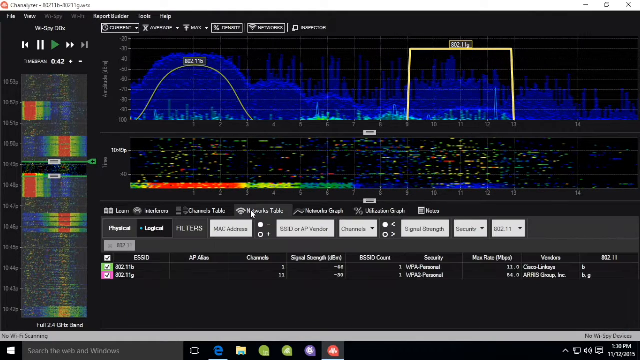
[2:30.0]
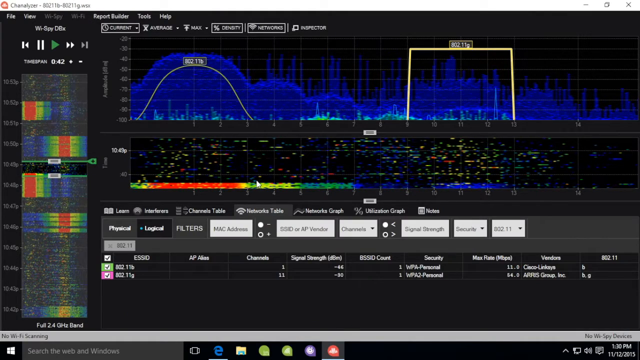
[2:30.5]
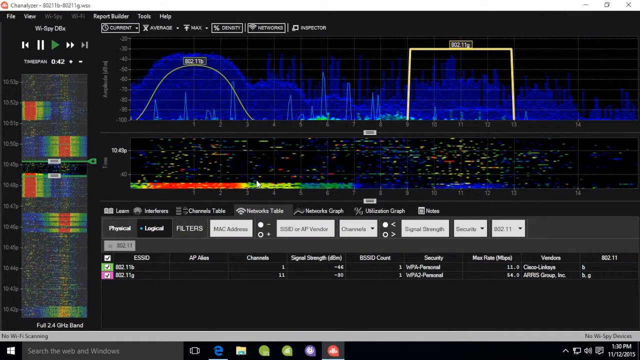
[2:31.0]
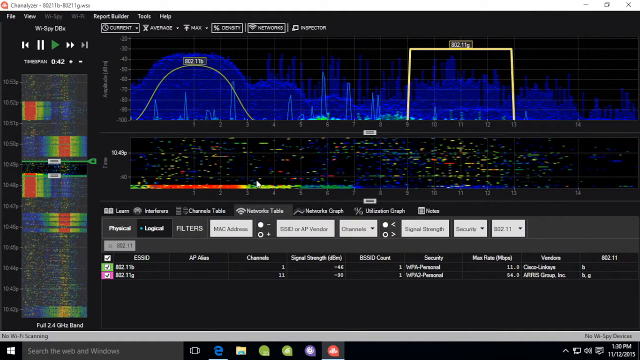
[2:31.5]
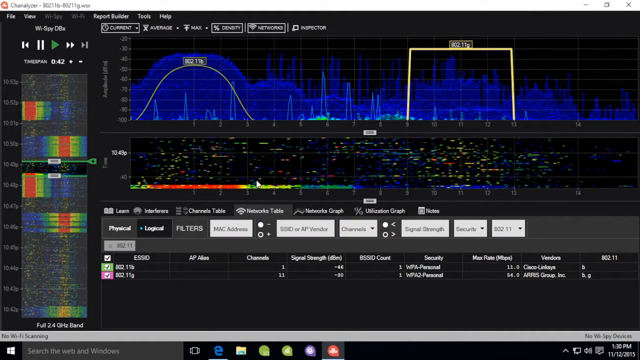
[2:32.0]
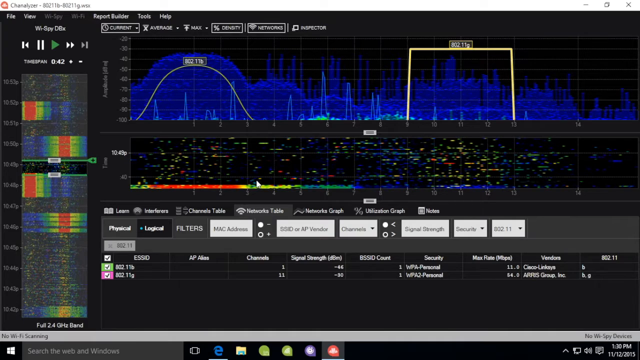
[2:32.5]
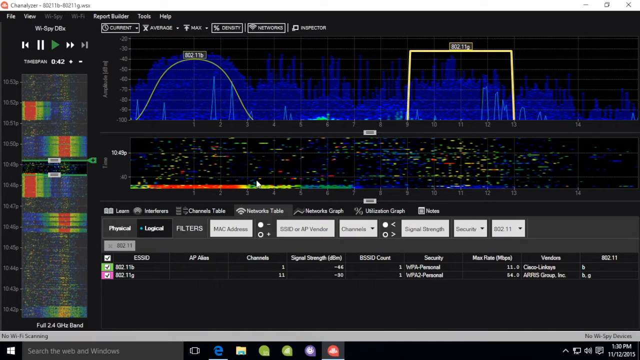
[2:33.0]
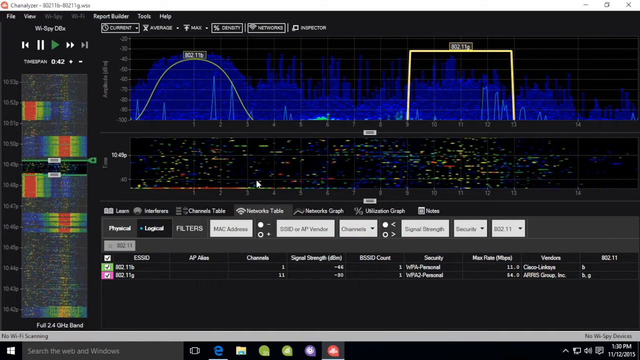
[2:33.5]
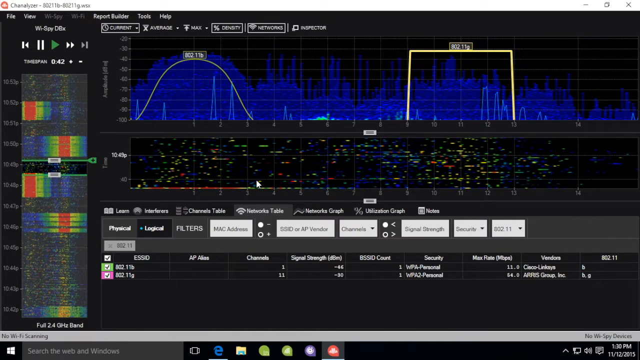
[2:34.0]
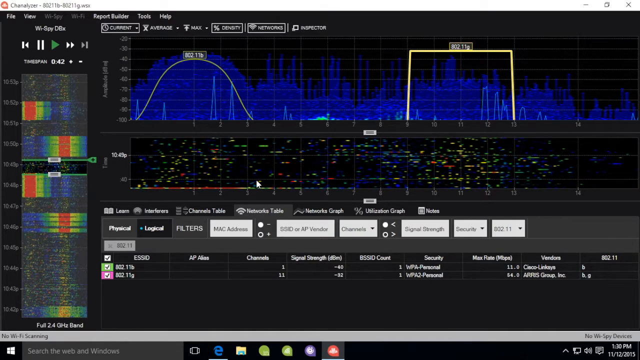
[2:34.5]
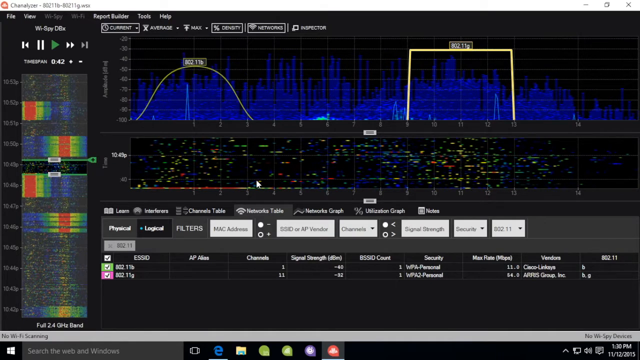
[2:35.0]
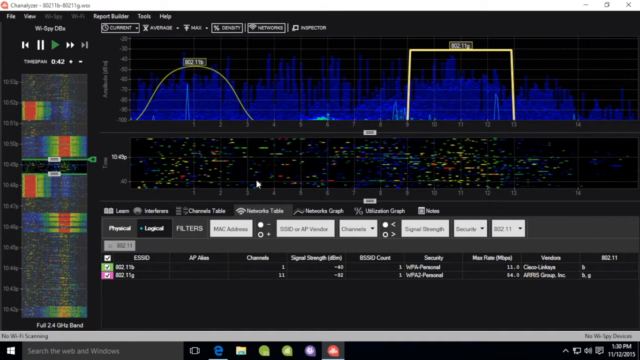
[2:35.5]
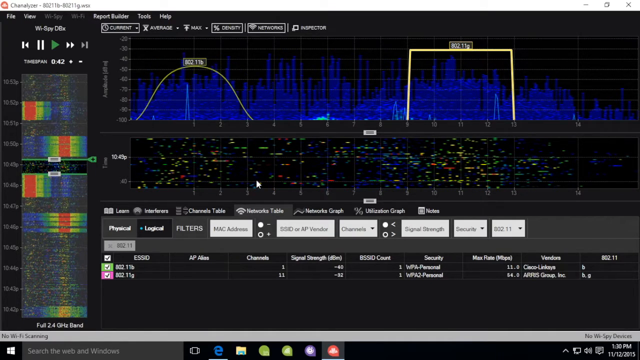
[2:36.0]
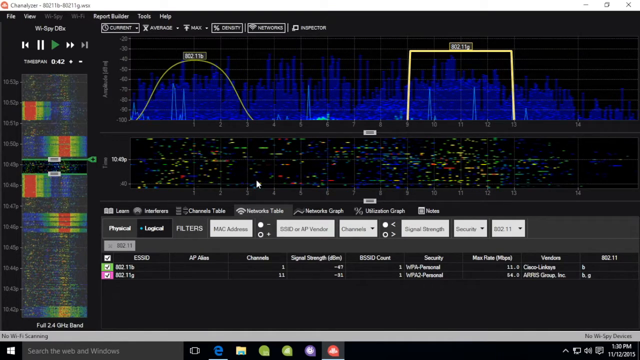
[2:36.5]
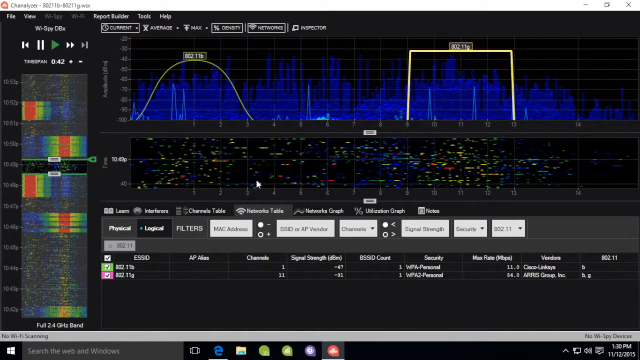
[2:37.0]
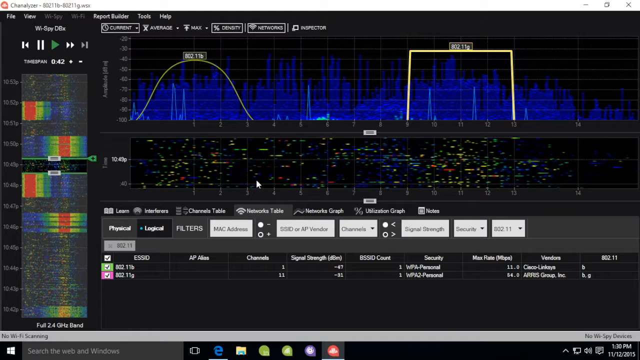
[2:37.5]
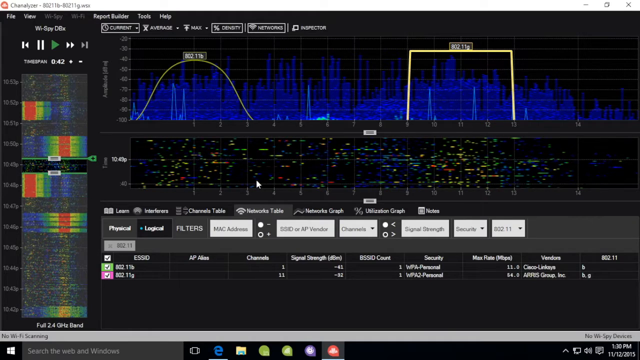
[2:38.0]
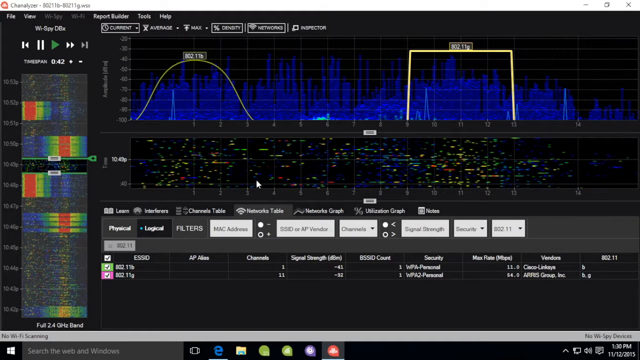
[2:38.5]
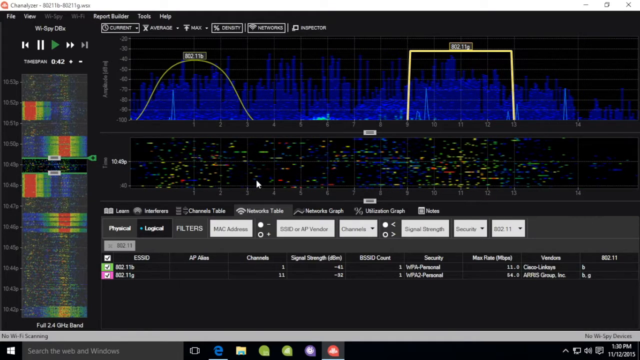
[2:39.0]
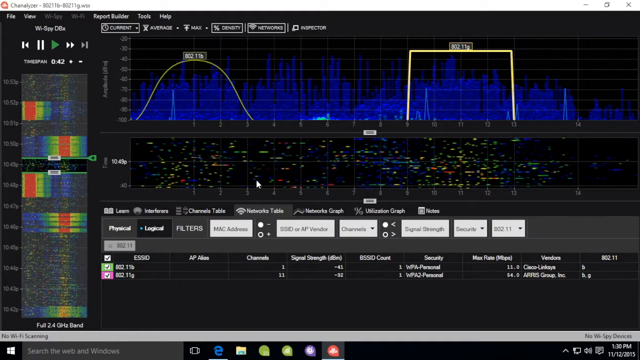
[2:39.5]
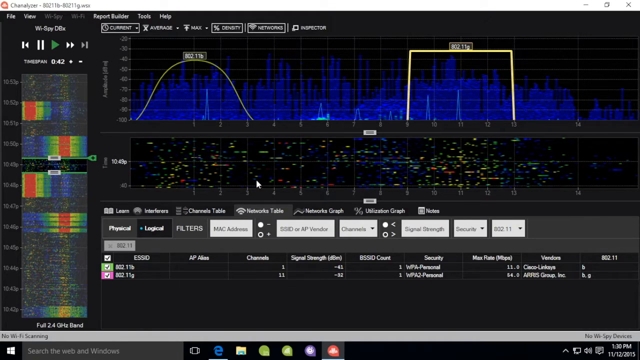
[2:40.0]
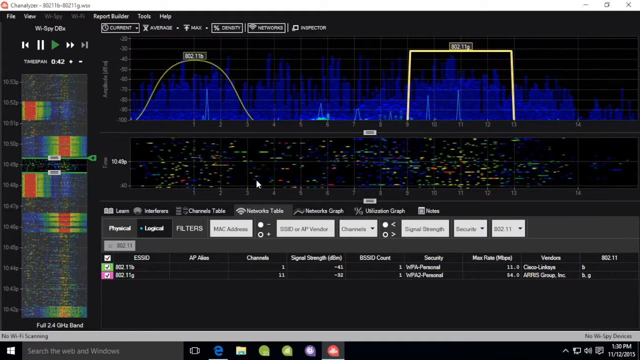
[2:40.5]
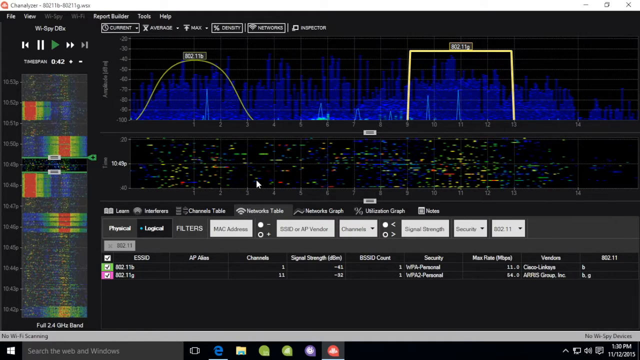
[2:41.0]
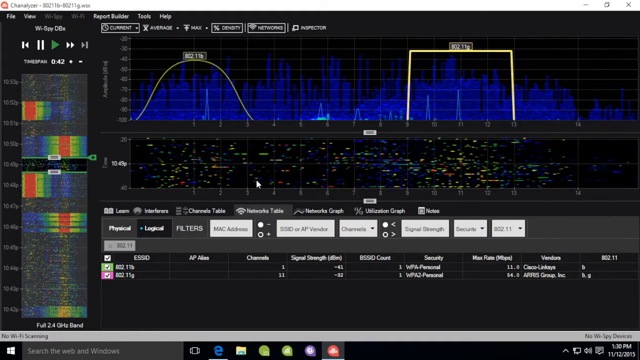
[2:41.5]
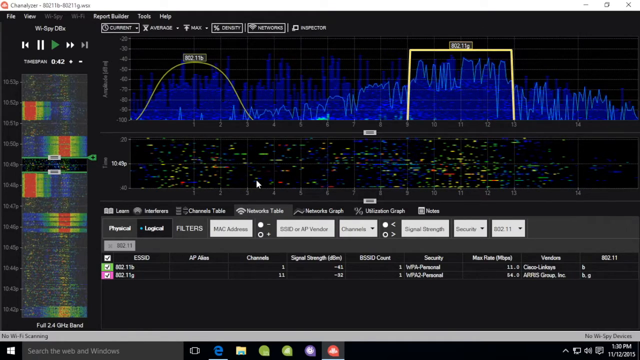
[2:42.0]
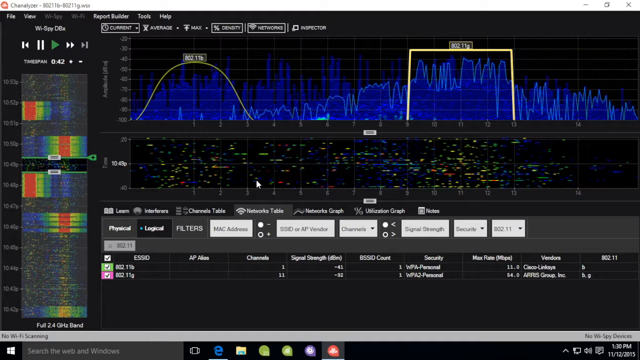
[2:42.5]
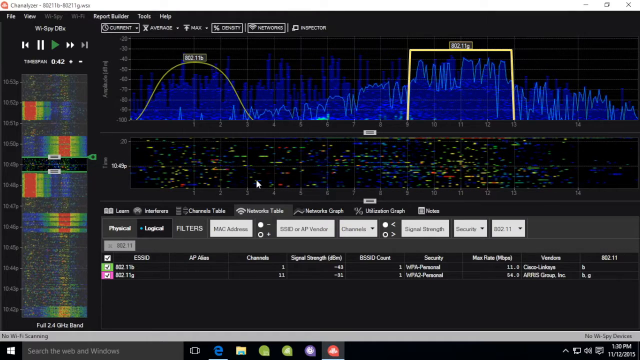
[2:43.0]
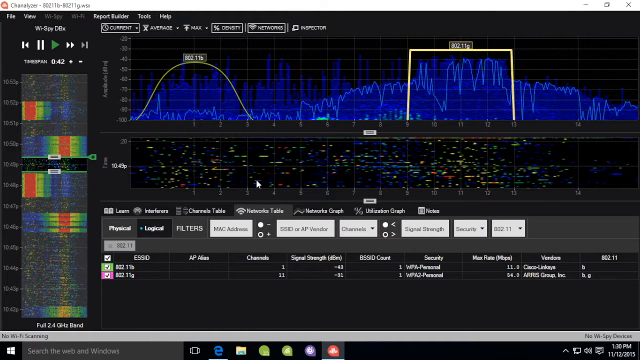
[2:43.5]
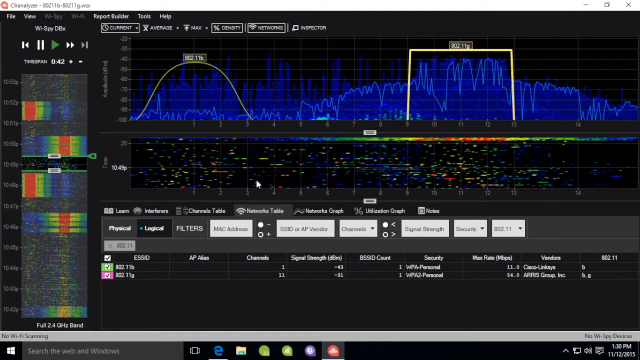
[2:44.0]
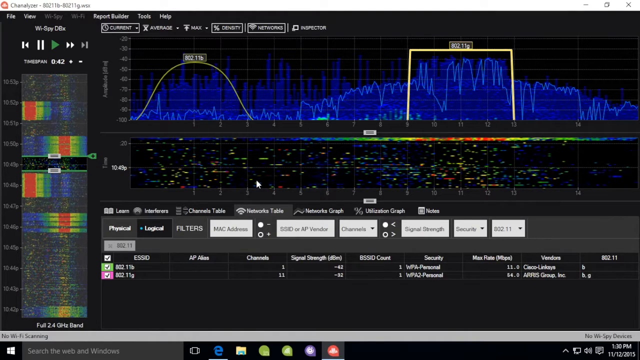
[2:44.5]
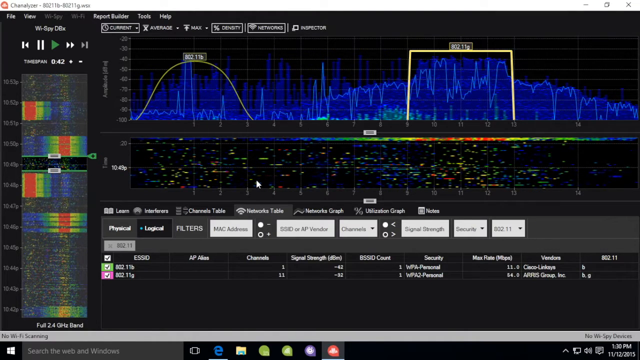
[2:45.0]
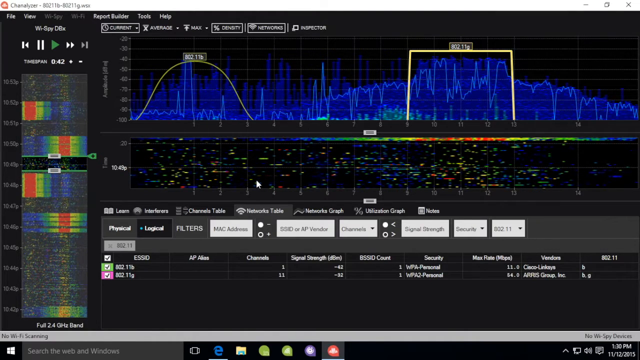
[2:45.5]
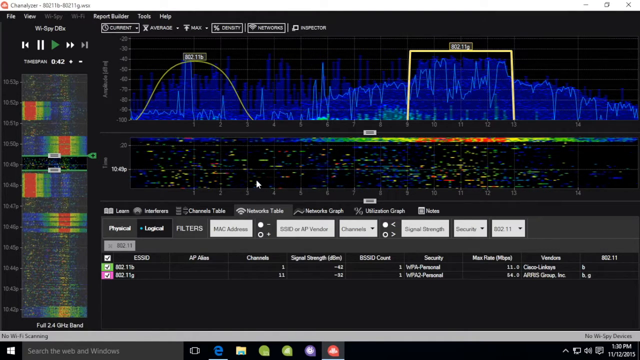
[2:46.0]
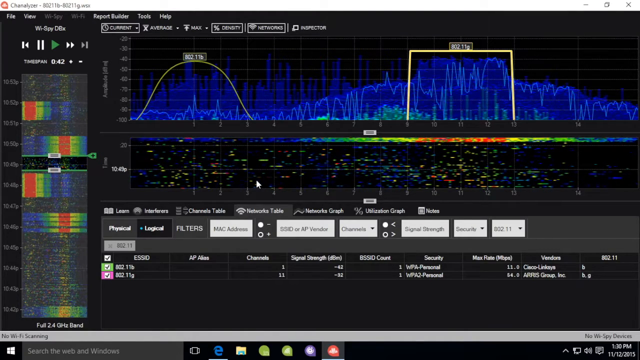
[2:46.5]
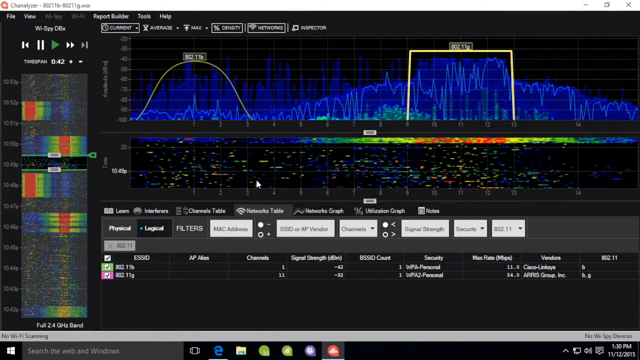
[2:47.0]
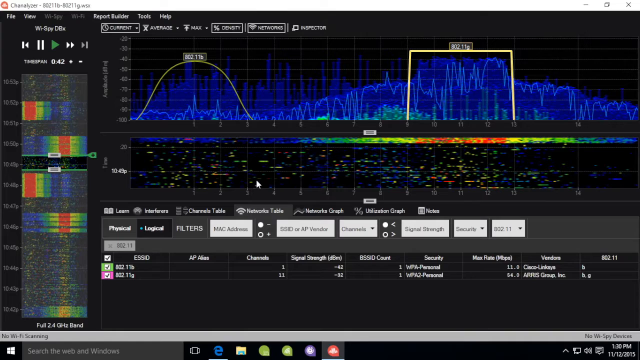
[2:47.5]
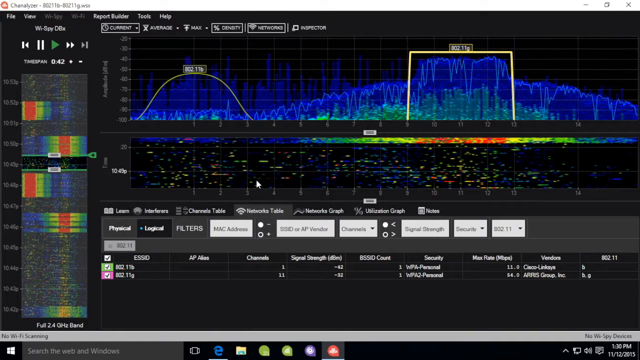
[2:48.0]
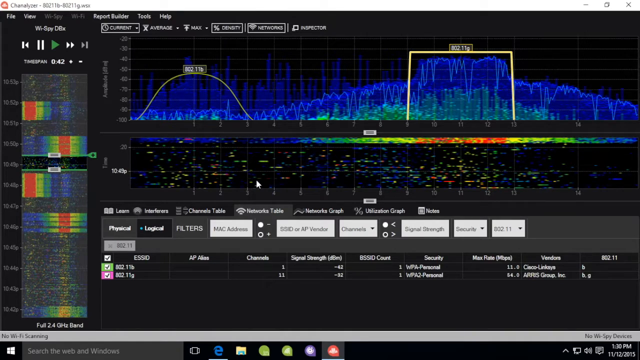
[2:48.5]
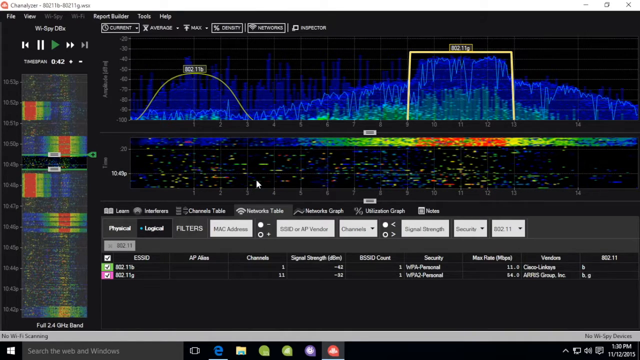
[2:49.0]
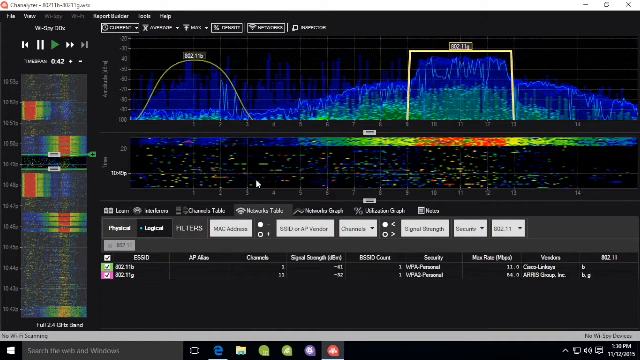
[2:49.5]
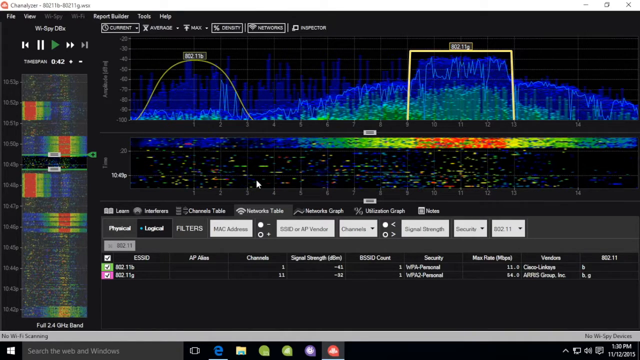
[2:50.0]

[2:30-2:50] Various networks are listed, including 802.11g, 802.11b and 802.11c. Packet information across the networks appears as a color-coded heat map in the center, apparently showing packet density forming along it, with what seems to be a time frame to the left. The networks can be filtered so that 802.11b networks are not shown.